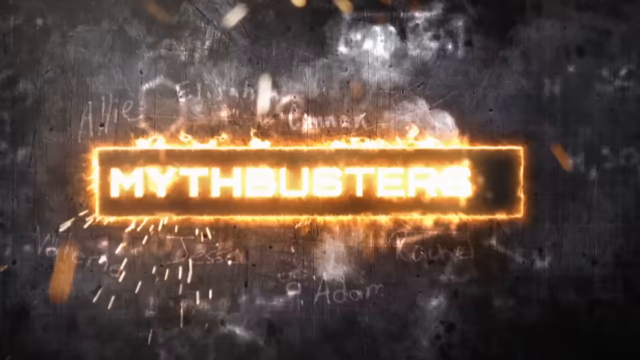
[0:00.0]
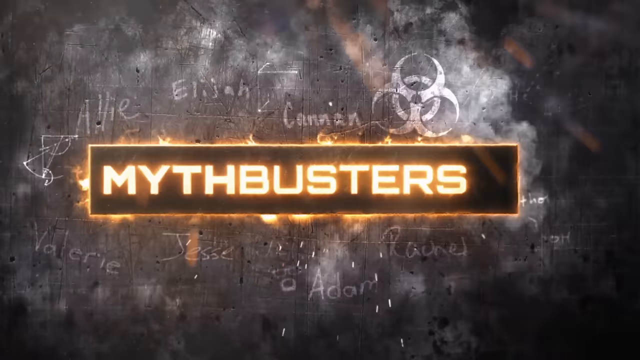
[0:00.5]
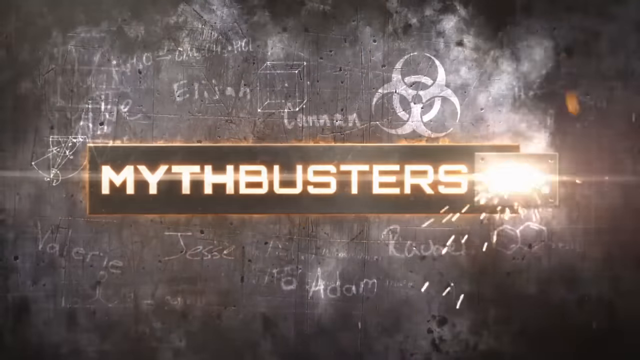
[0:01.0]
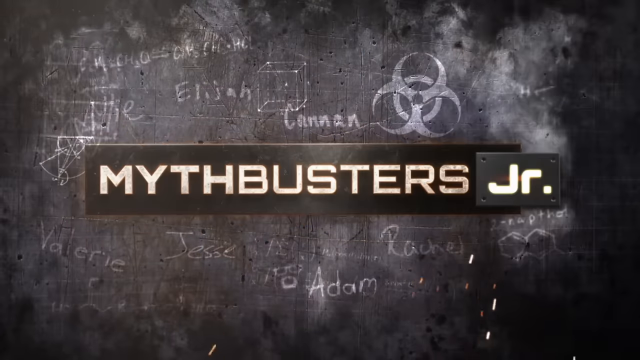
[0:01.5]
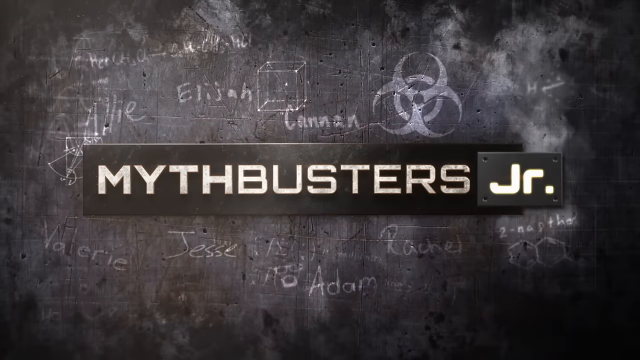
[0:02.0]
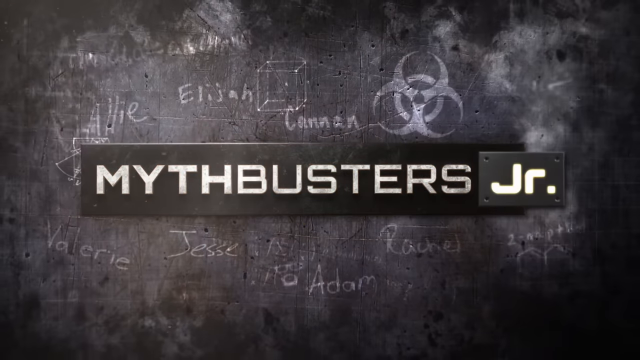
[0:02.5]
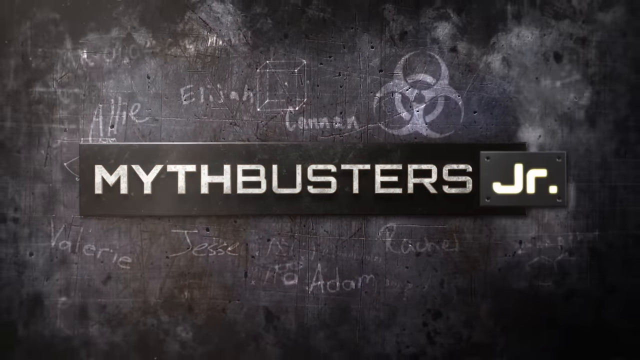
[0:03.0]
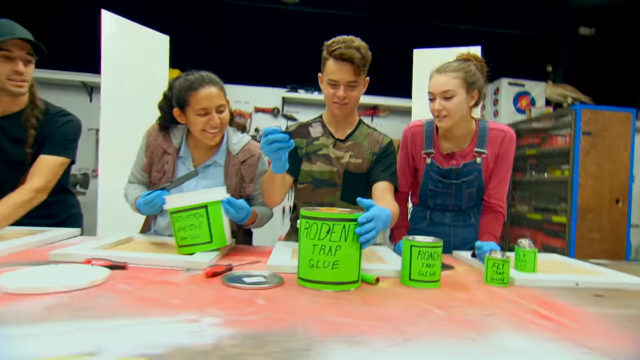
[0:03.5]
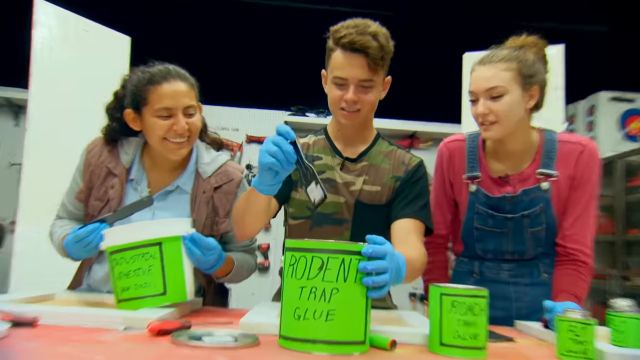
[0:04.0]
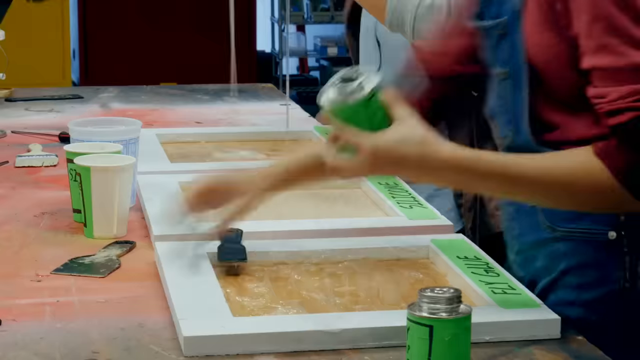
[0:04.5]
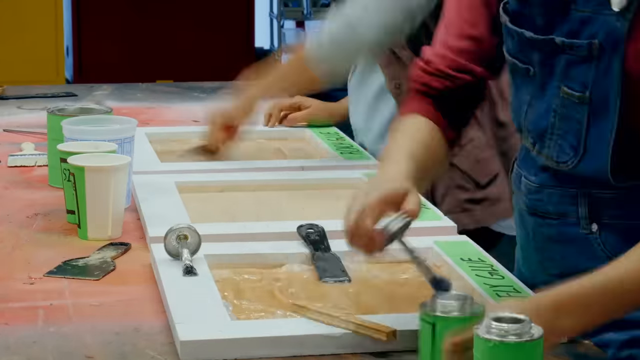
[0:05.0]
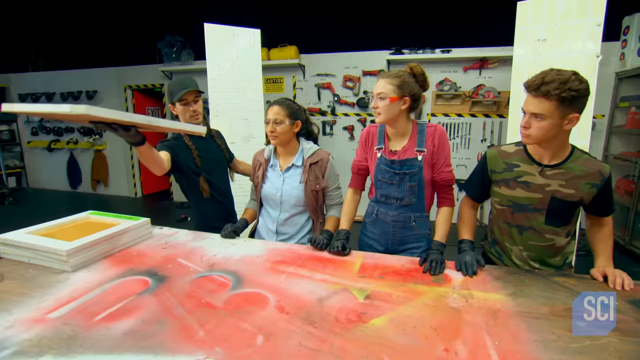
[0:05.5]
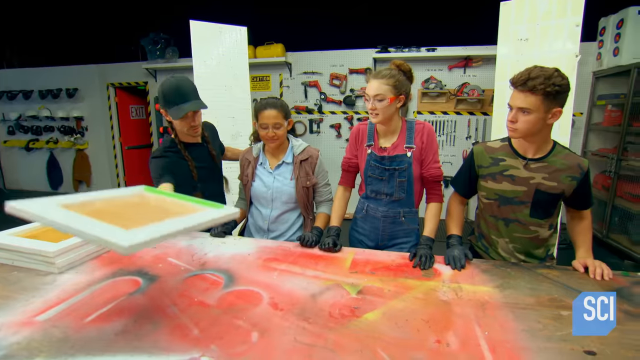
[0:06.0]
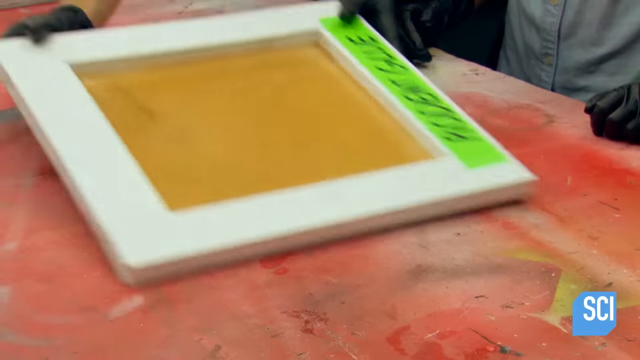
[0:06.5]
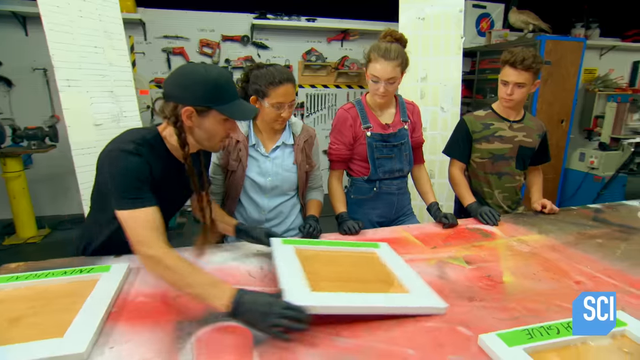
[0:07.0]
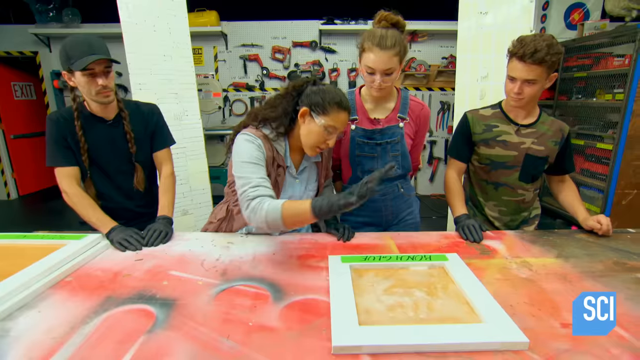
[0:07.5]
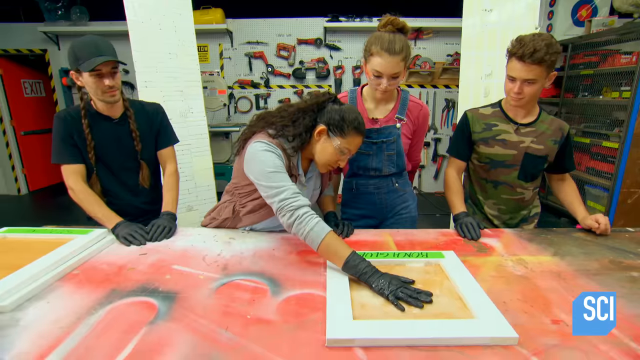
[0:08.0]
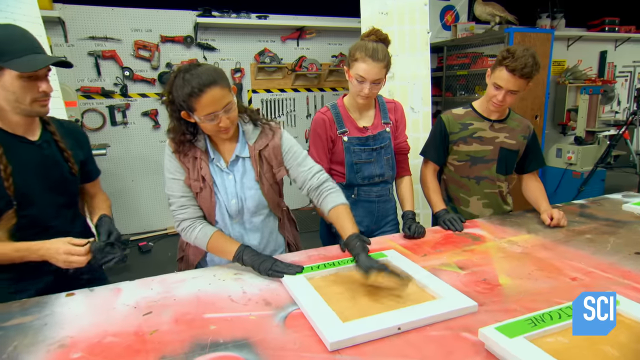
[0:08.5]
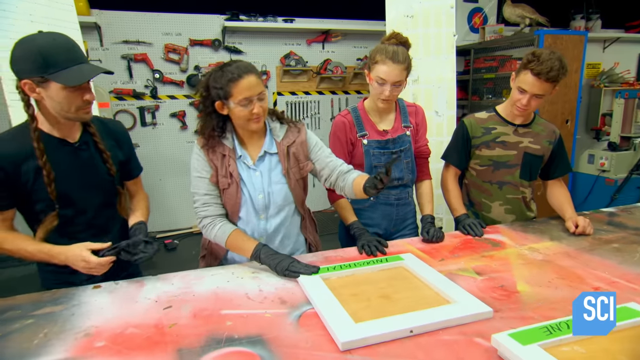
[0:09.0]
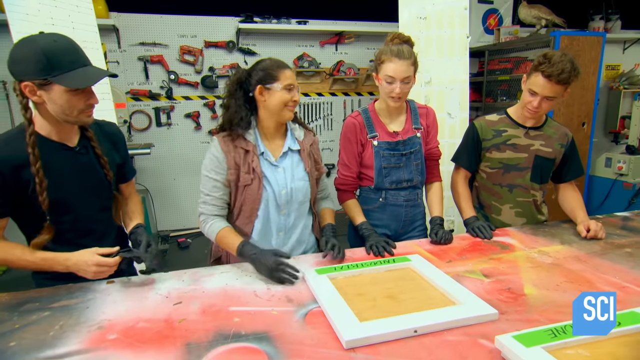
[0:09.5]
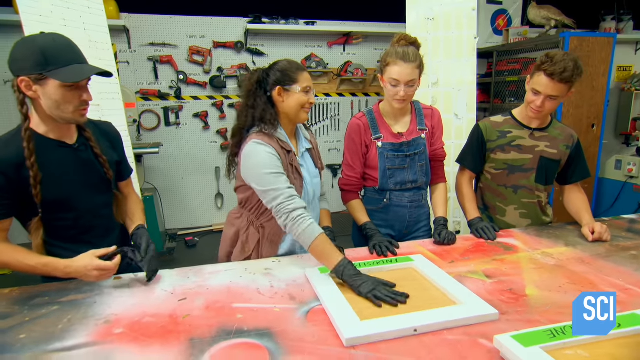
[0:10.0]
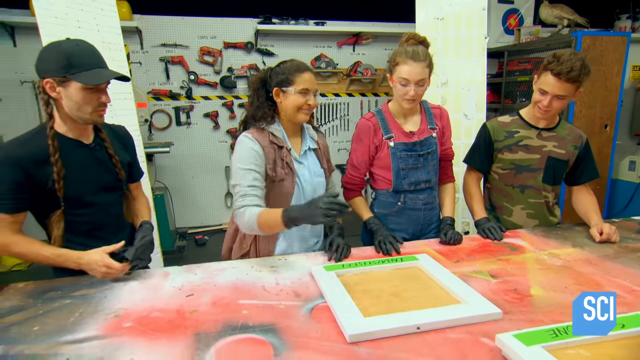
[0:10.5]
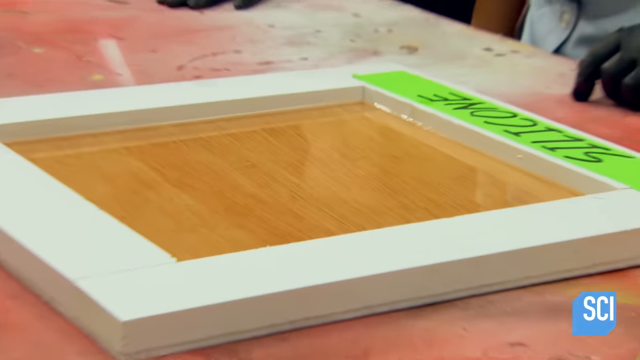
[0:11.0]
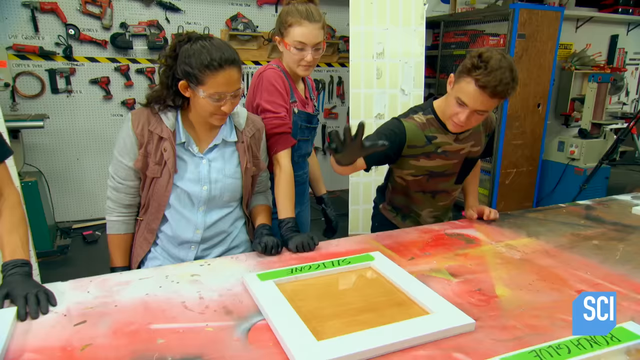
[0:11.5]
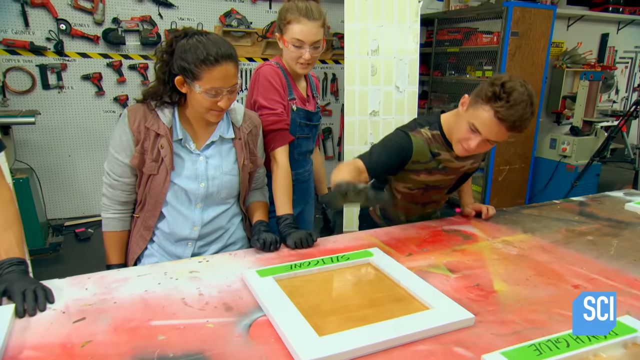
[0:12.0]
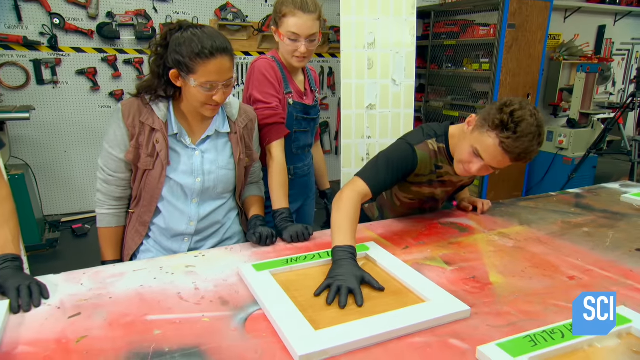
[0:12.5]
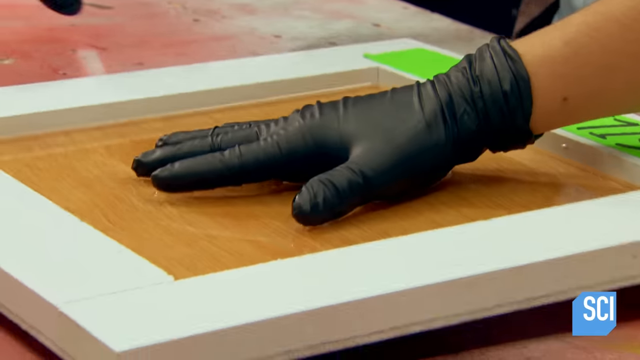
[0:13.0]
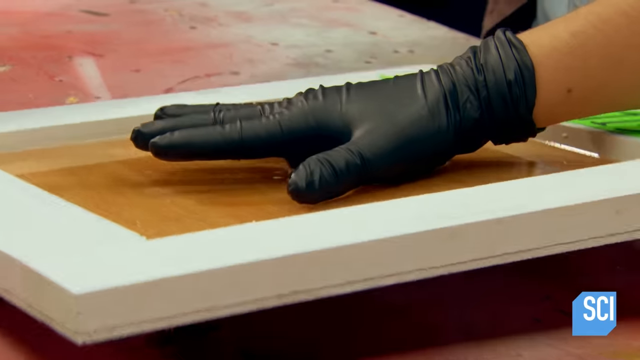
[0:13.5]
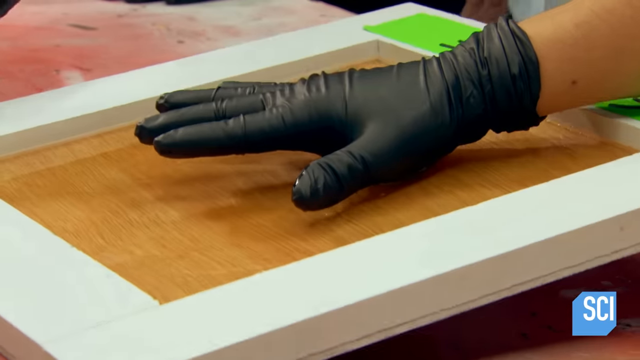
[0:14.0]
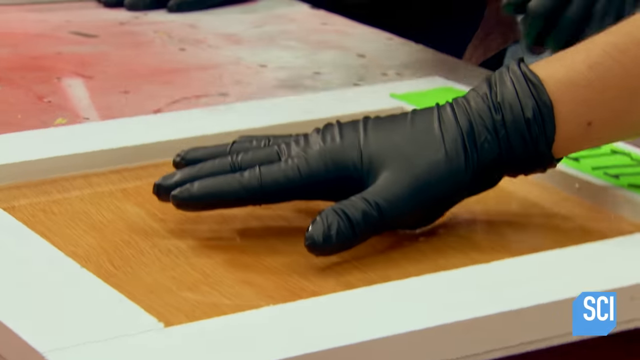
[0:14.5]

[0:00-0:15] The video opens on a gray screen, and a large logo in hot orange comes into view. It then fades to gray, and the text reads "MythBusters Jr." The scene opens on what looks like a workshop, where people are standing at a work table: three teenagers and what appears to be one adult. He has two long pigtails and a black t-shirt. The three teens are two girls and a boy. One girl wears a blue shirt with a sleeveless vest over it. The young lady in the center wears a fuchsia top and denim overalls, and the young man to the right has on a black t-shirt and a black apron; his t-shirt is camouflaged, with black accents on the sleeves and a pocket. The tabletop they are working on is covered in paint and previous projects. In front of them are three large paint cans with green paper put over them to cover the labels, and written on the green paper is "rodent trap glue".